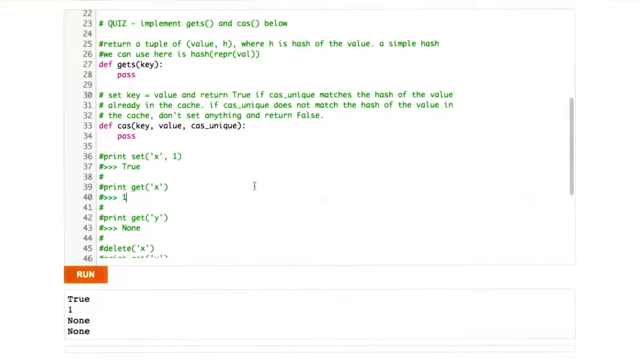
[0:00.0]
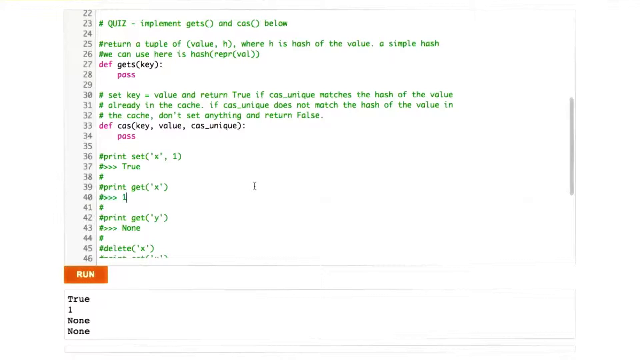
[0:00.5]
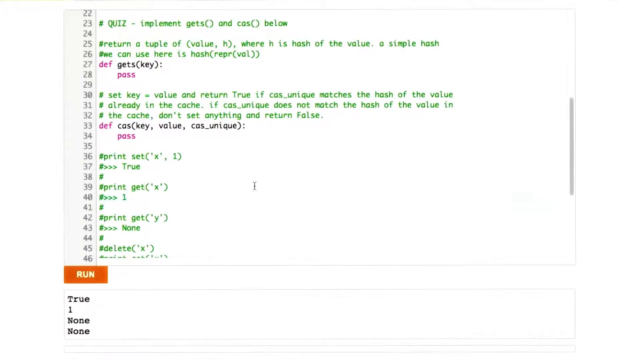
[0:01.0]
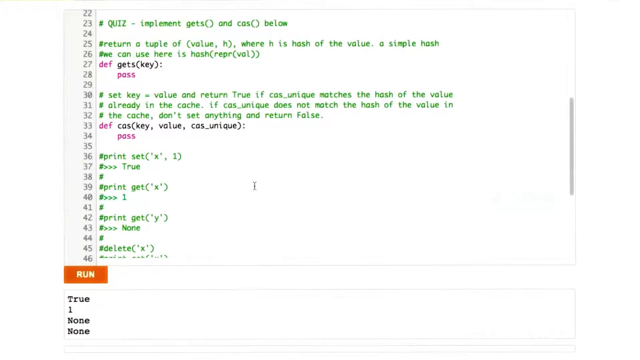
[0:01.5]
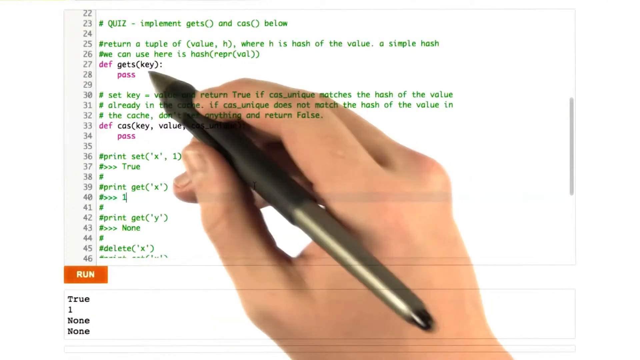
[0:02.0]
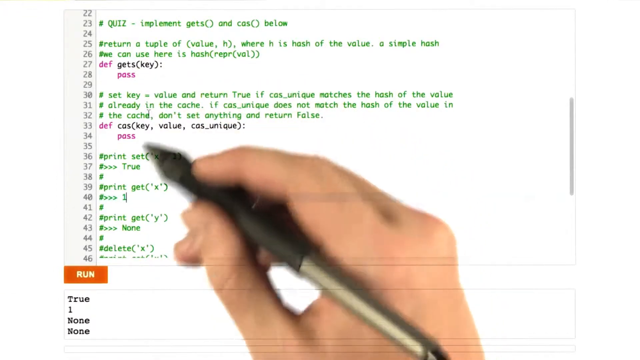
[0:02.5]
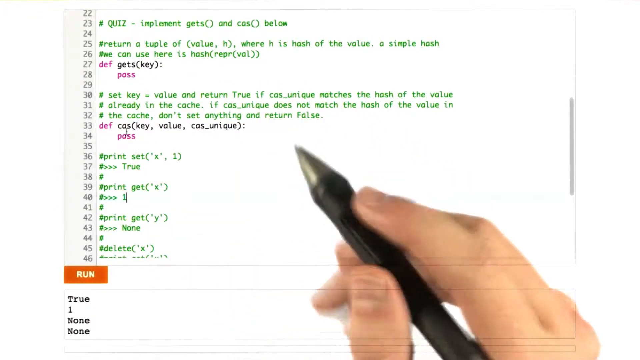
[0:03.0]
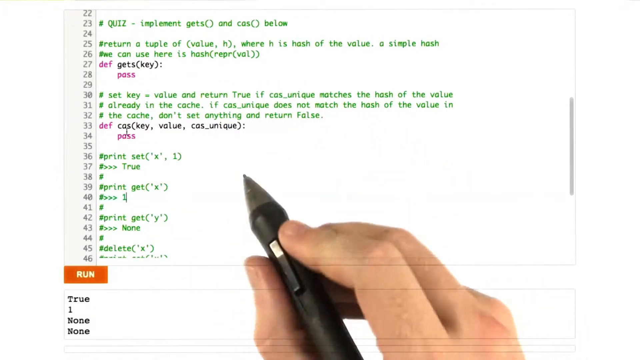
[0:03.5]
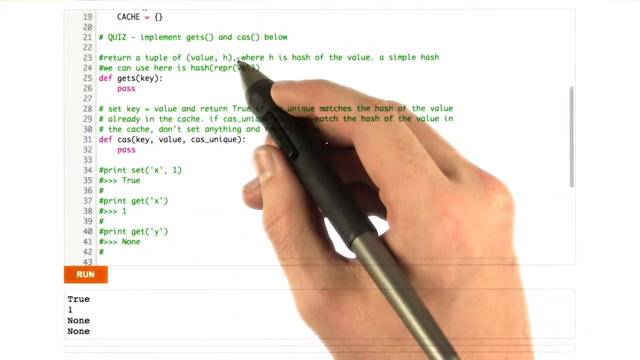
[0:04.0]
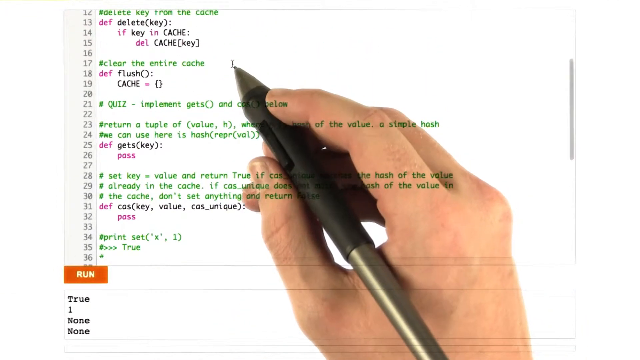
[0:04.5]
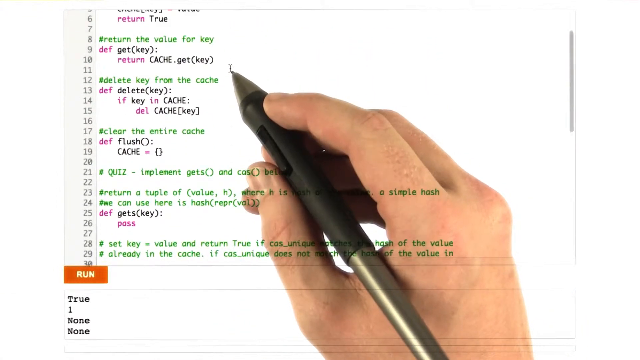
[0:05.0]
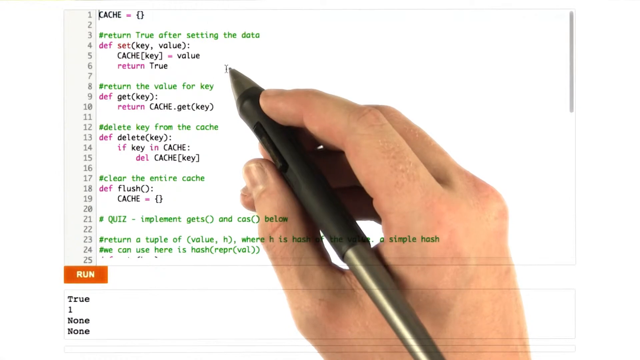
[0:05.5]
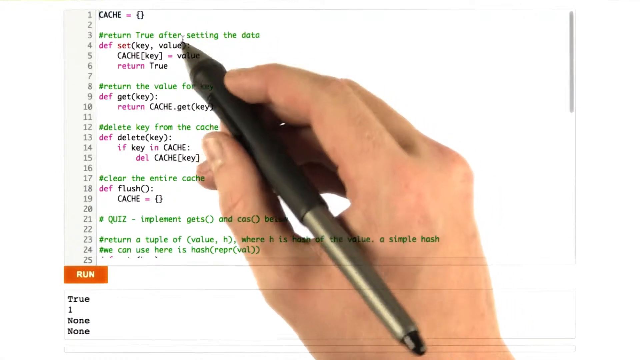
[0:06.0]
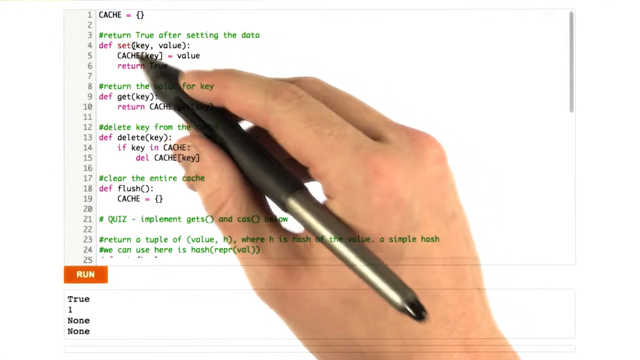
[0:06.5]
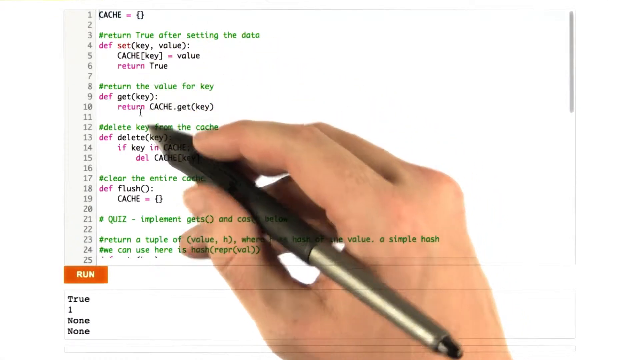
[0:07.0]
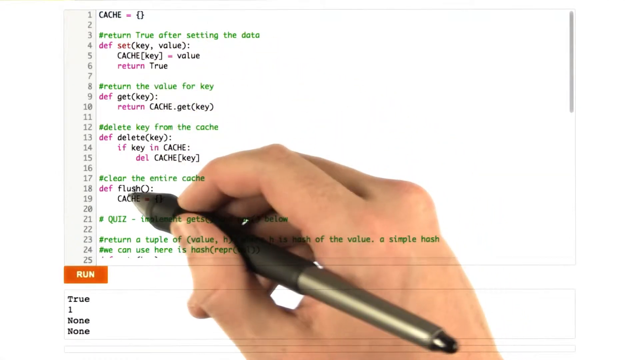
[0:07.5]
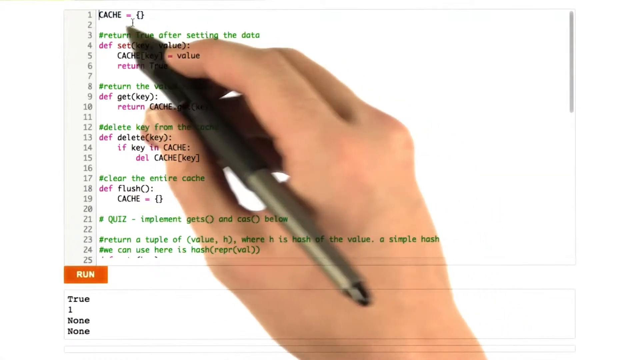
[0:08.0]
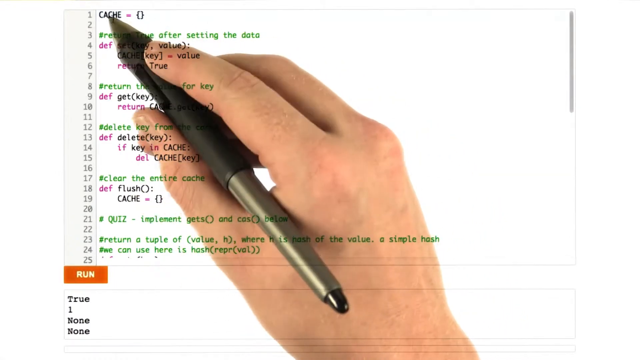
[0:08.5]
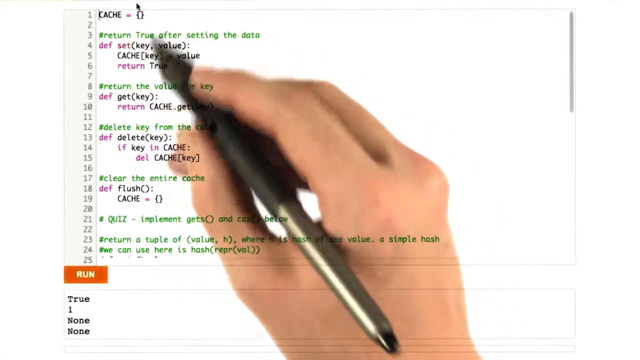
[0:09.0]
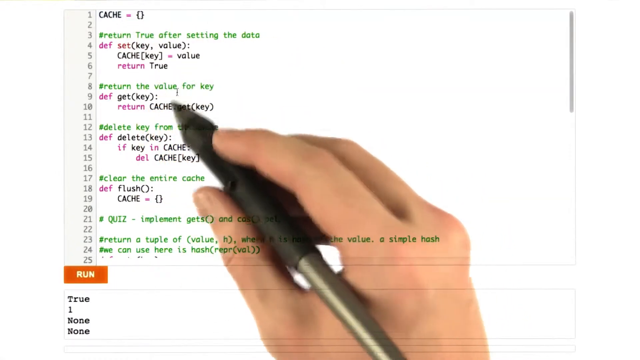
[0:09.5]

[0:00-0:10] The view appears to be of a computer monitor screen, zoomed in so close that only the screen is visible, not the computer. A column of numbers runs down the left side, beginning with 22 and ending with 46. On line 23 there is a number sign symbol followed by "quiz, implement gets, and CAS". A person's right hand enters from the lower middle of the screen, holding a black and silver pen between the thumb and forefinger. The hand immediately goes up to line 27 and taps underneath the words on that line, then moves the pen down, still keeping it steady with the thumb and forefinger. The screen scrolls back up, and the hand moves from the top of the screen to the bottom as if making little dots on it. The hand then comes back up and makes a circling motion with the pen, but no circle appears on the monitor.